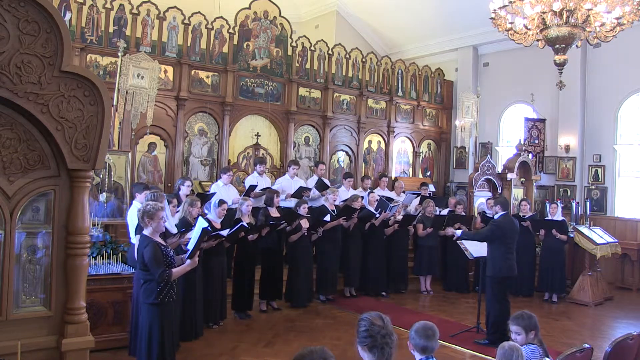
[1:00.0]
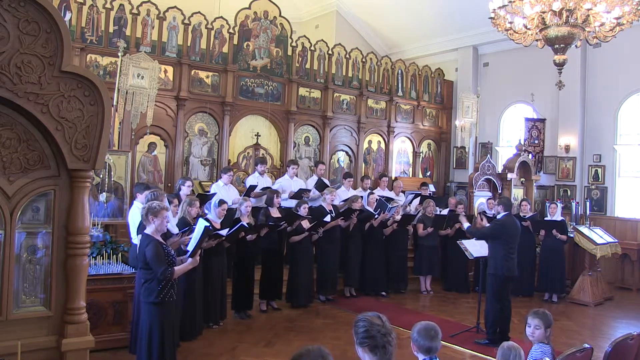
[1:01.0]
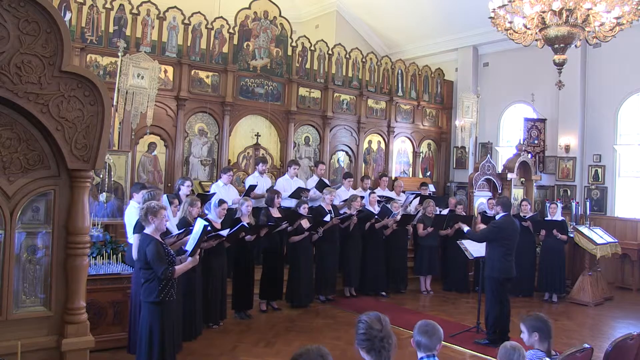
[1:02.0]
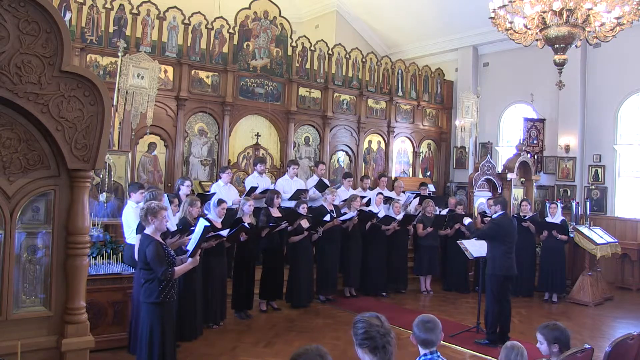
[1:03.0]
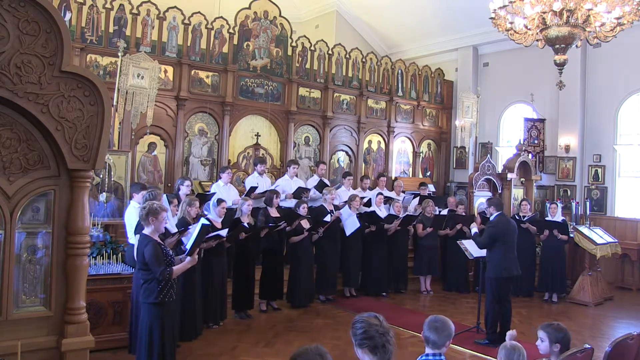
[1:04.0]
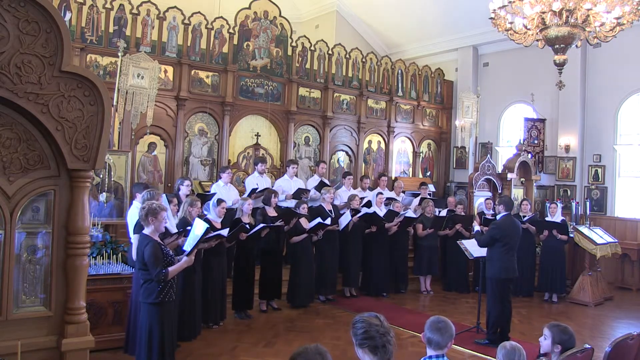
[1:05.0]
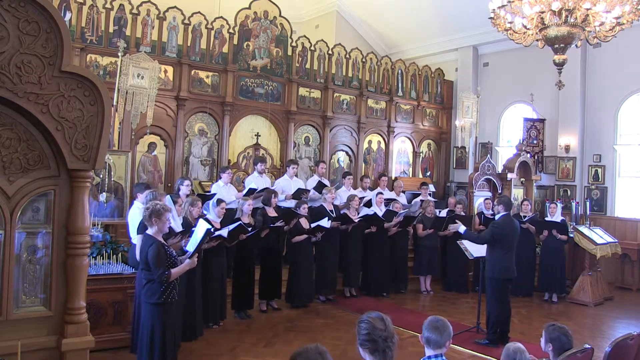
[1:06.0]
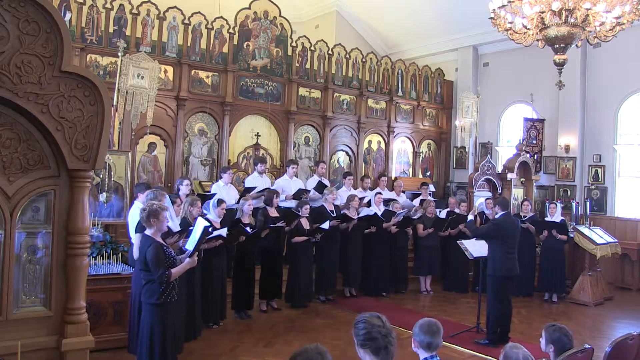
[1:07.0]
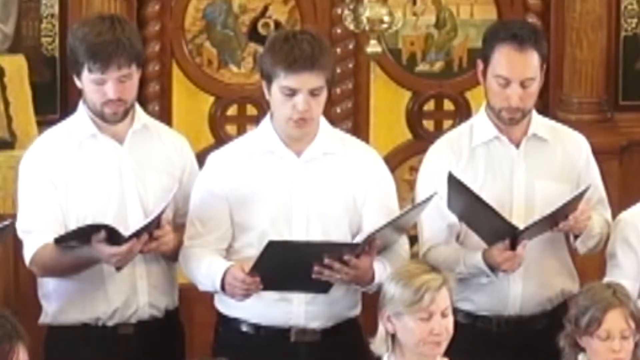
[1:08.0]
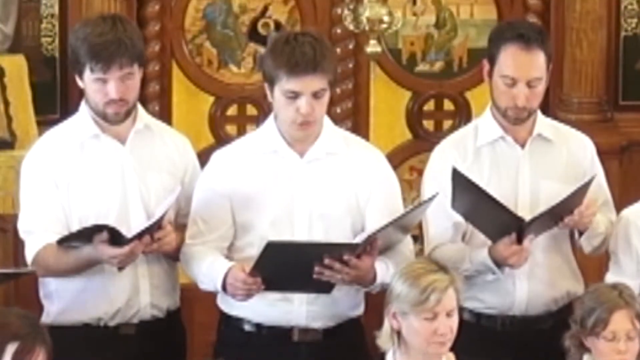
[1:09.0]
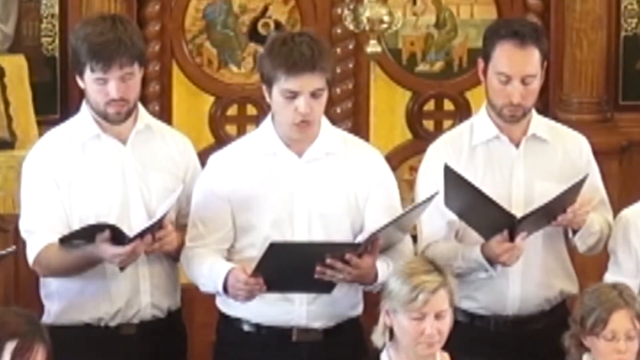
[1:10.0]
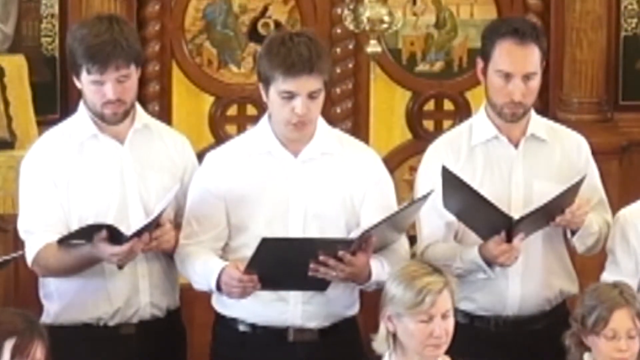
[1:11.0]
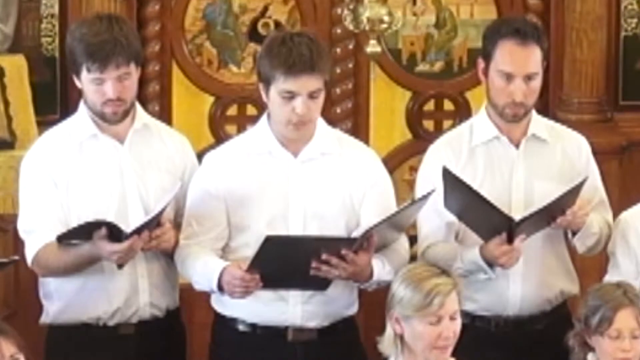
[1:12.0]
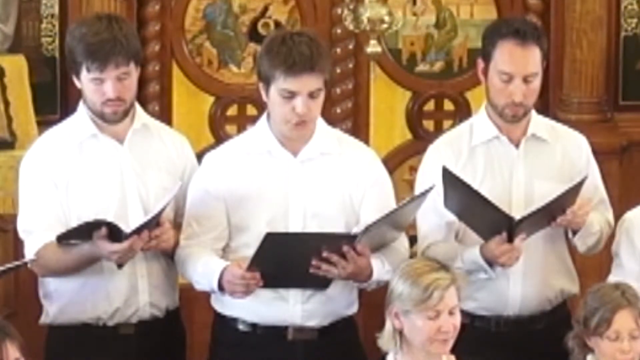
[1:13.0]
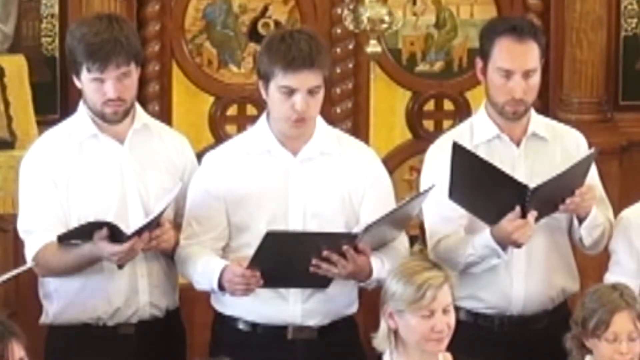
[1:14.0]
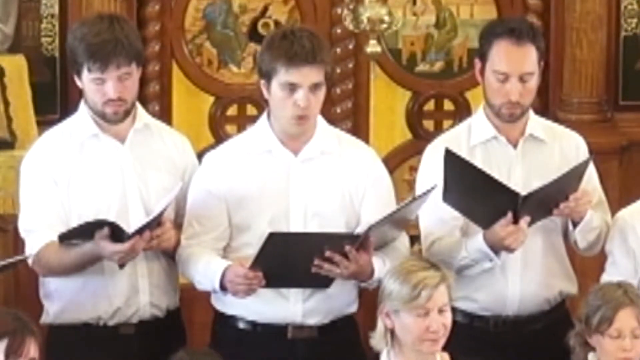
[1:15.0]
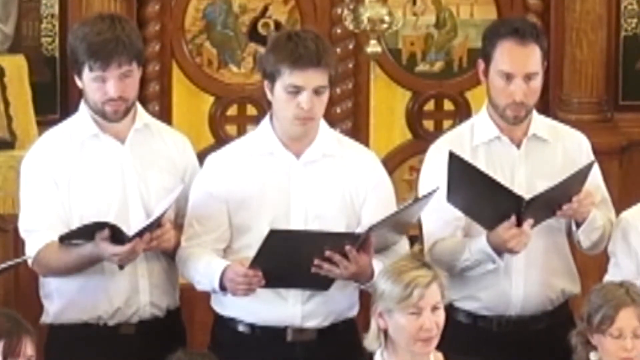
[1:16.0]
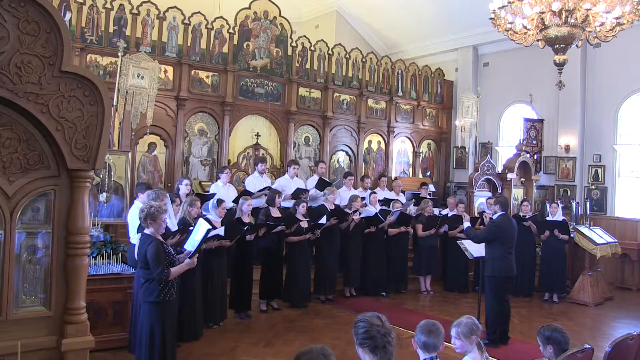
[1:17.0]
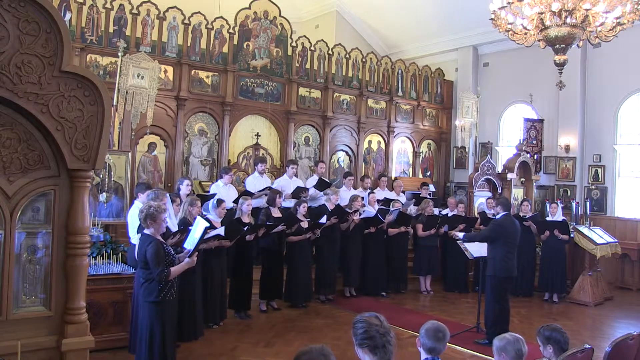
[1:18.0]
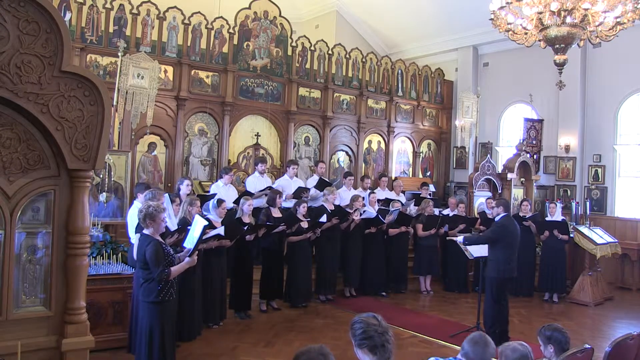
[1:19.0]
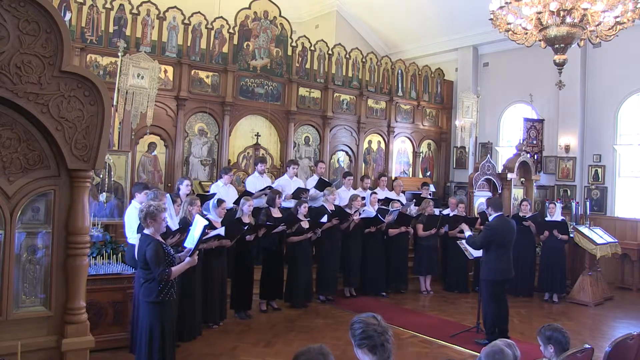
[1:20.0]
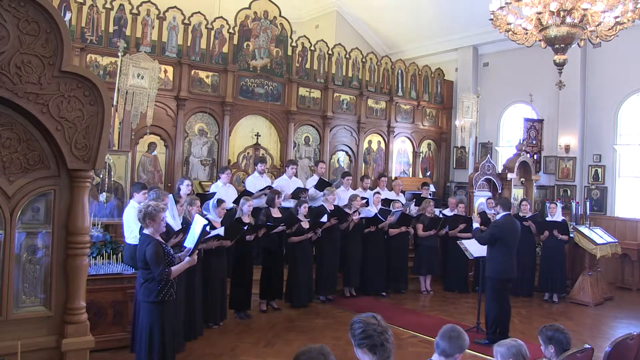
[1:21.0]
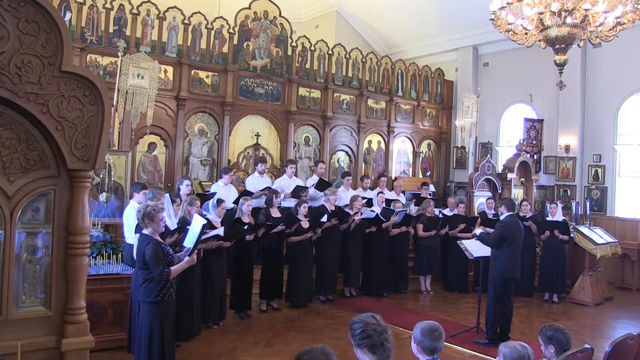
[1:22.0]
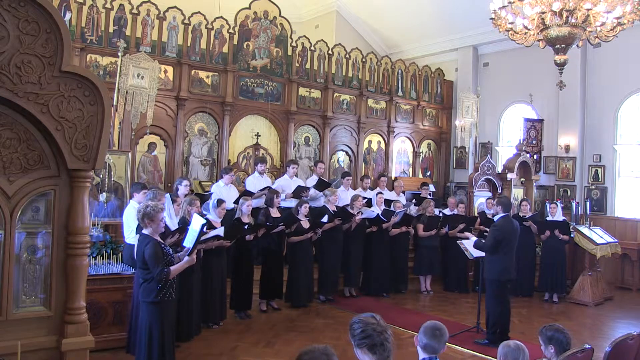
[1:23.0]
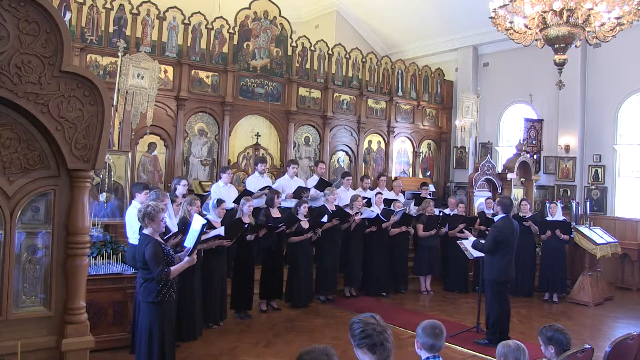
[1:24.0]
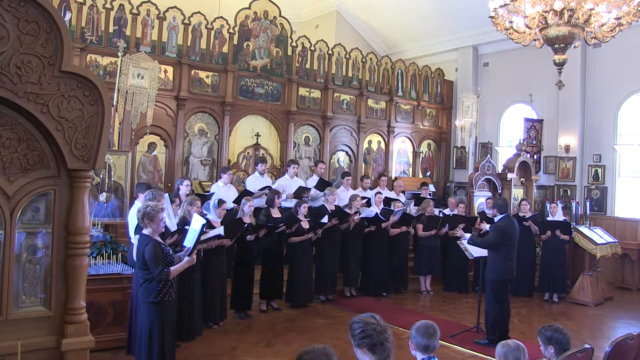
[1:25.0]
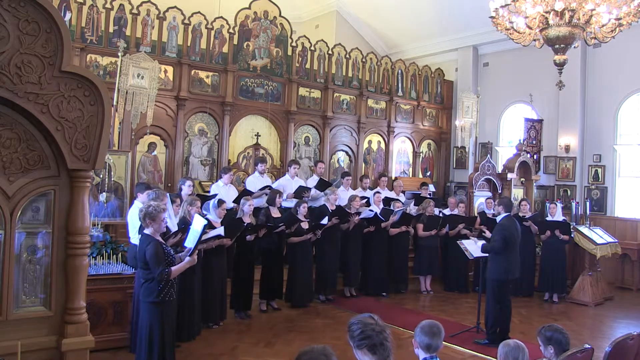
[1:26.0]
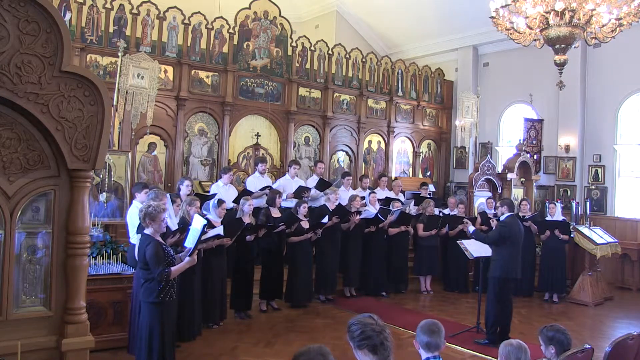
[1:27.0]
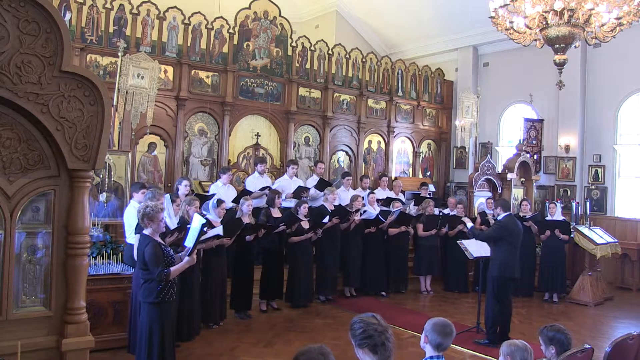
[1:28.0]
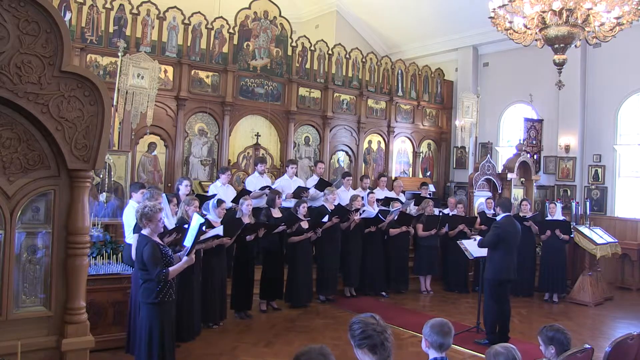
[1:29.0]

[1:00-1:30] The conductor continues making hand gestures as the choir sings. The camera shifts to the three singing men, who hold black books or black pamphlets in their hands. All three look down and sometimes look upward into the distance, focused on the song. The camera appears to focus on the man in the middle, who continues to sing. The view then shifts to the zoomed-out view of the whole choir with the conductor on the right side, using hand gestures to control the flow of the music. The ceiling and walls of the church are white, and a chandelier is in the top right corner. The conductor continues to sway his hands, and the singers periodically flip the pages of the books they are holding as they sing.